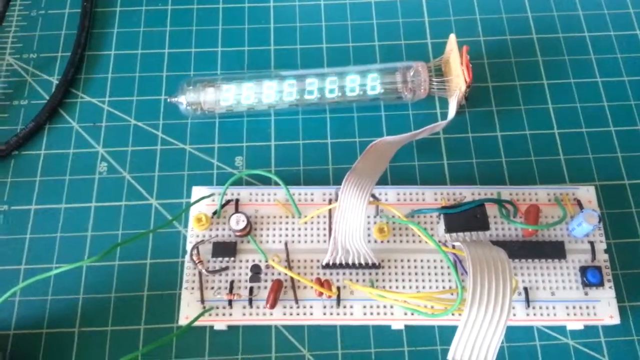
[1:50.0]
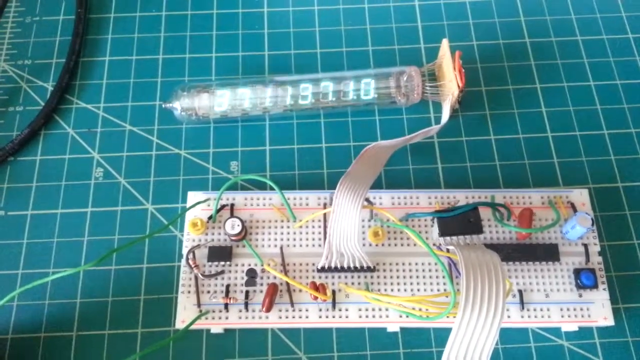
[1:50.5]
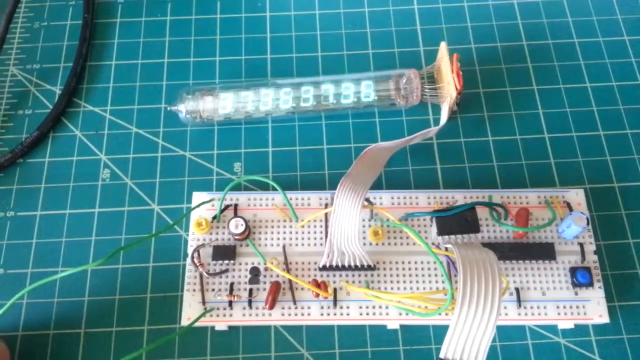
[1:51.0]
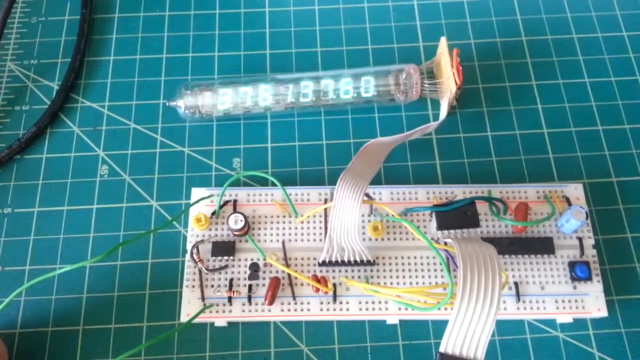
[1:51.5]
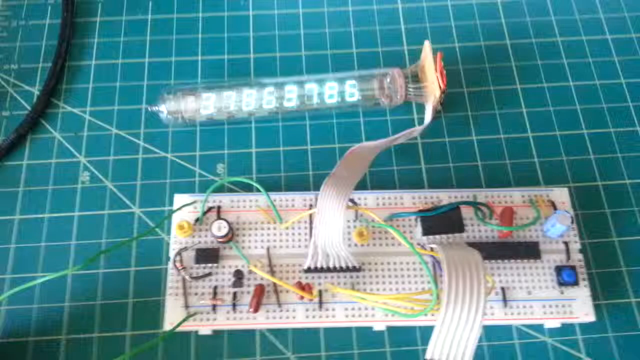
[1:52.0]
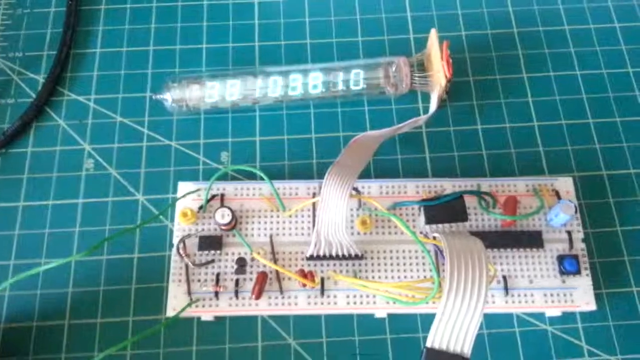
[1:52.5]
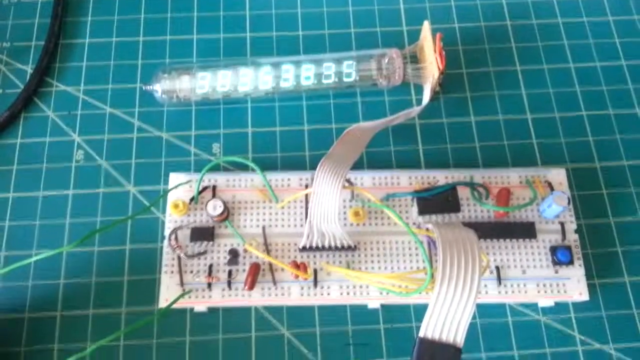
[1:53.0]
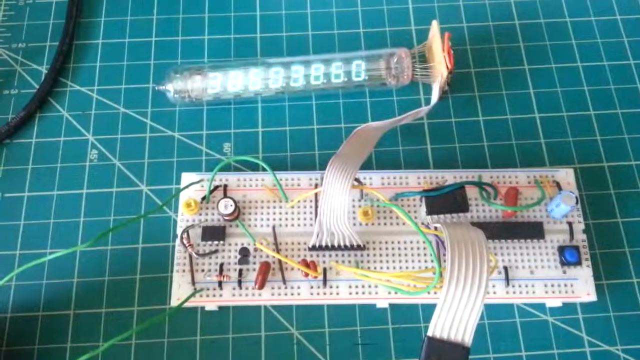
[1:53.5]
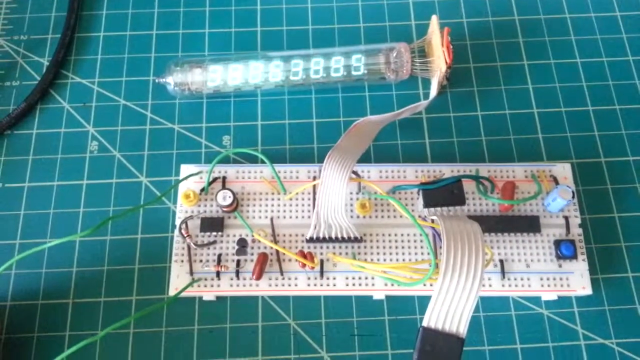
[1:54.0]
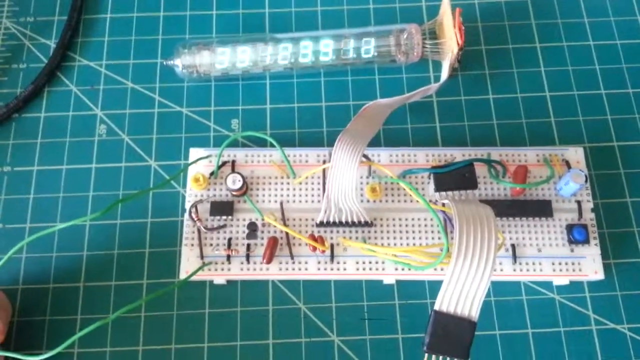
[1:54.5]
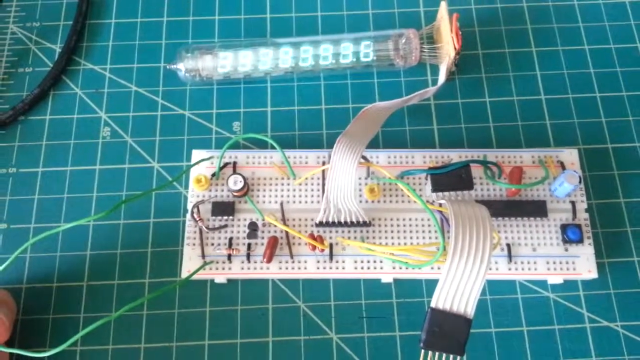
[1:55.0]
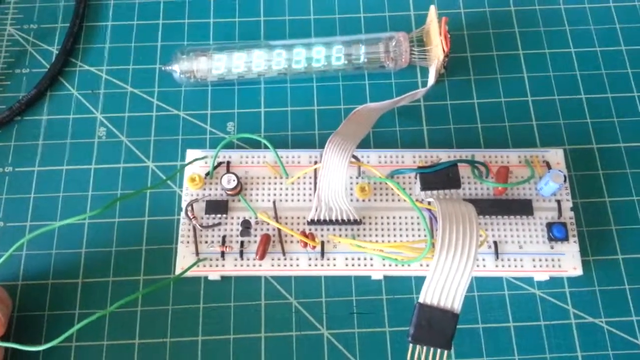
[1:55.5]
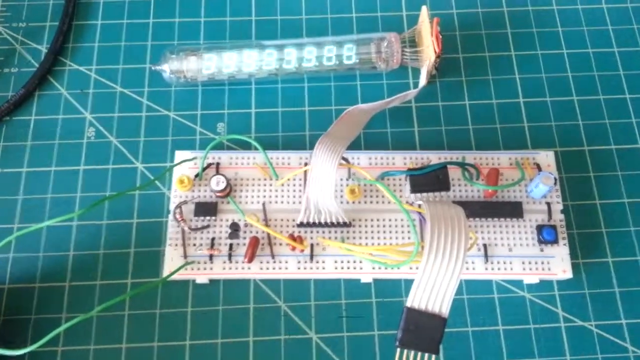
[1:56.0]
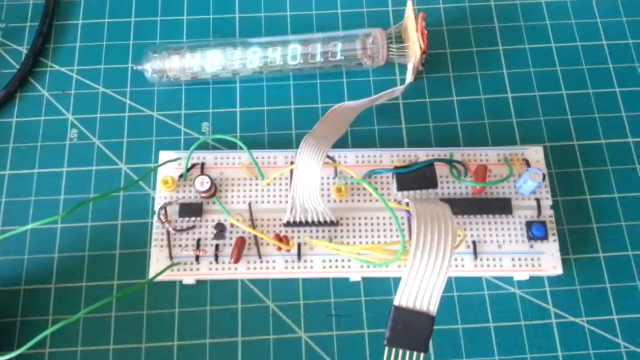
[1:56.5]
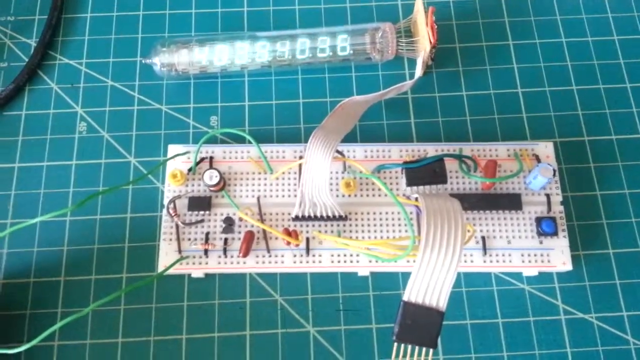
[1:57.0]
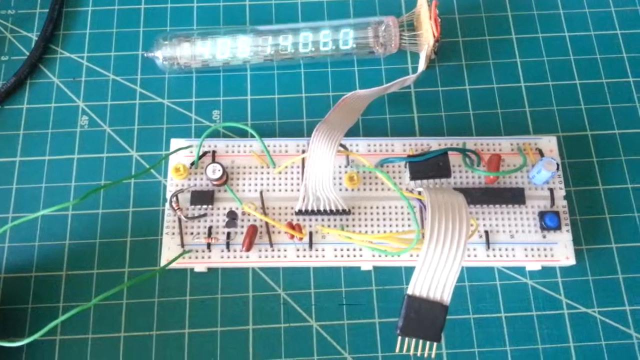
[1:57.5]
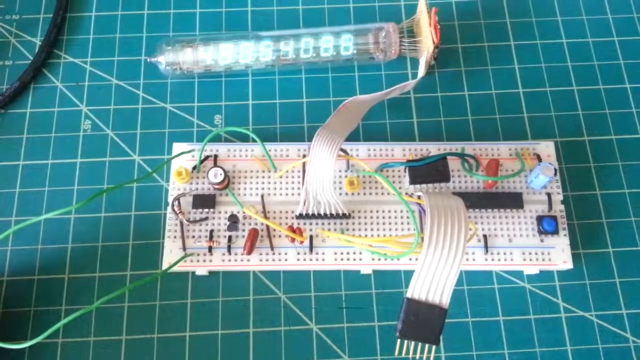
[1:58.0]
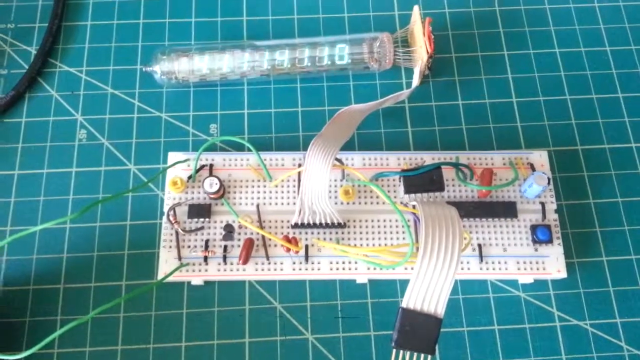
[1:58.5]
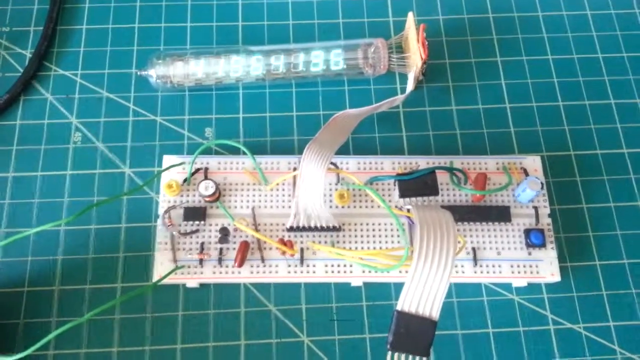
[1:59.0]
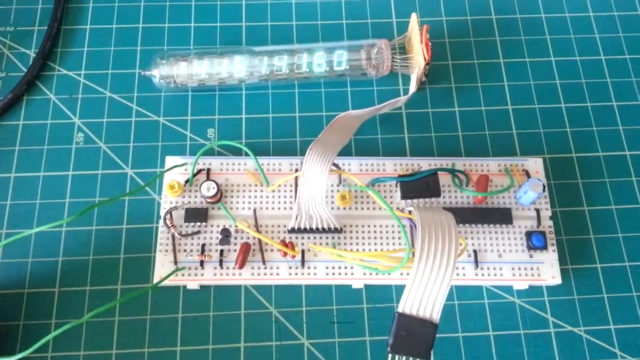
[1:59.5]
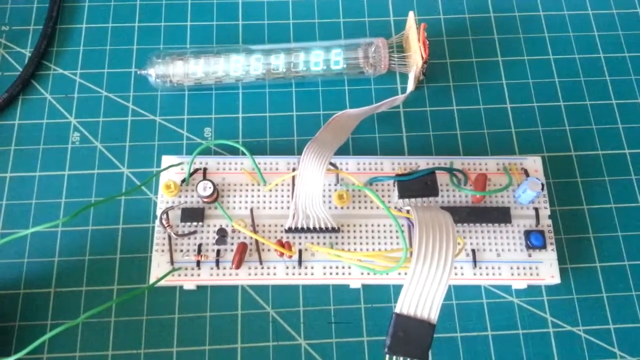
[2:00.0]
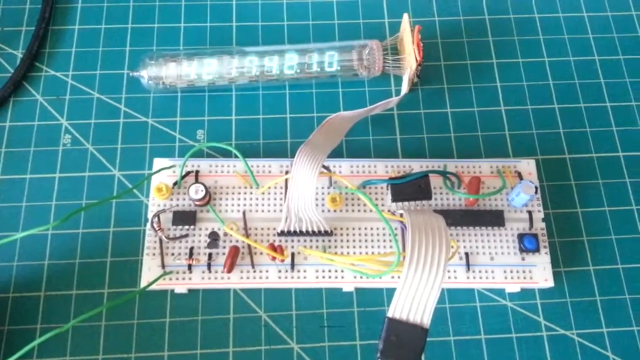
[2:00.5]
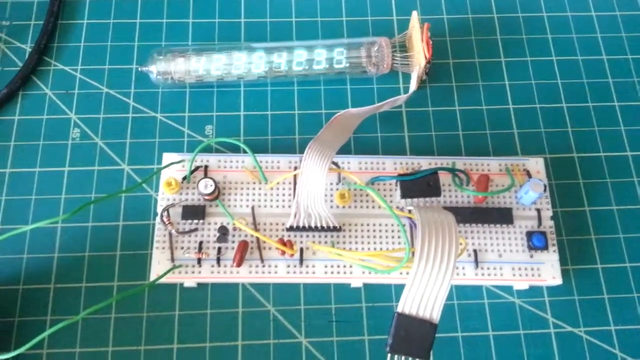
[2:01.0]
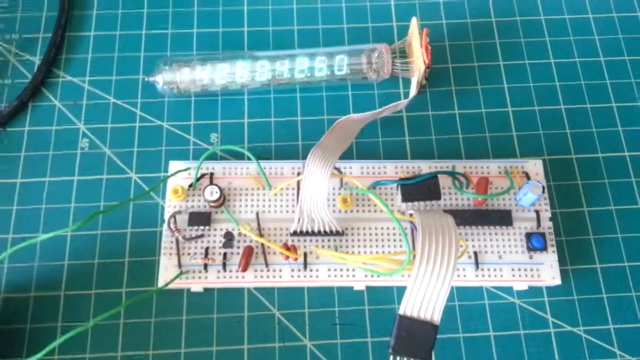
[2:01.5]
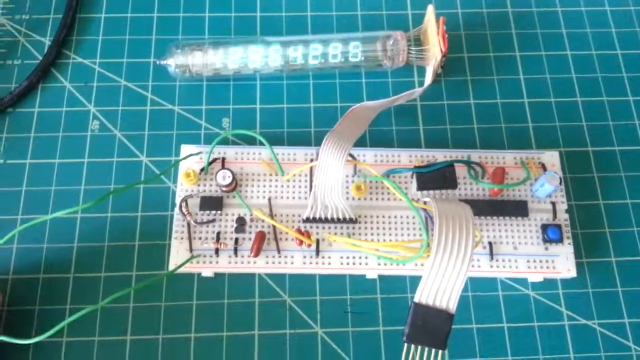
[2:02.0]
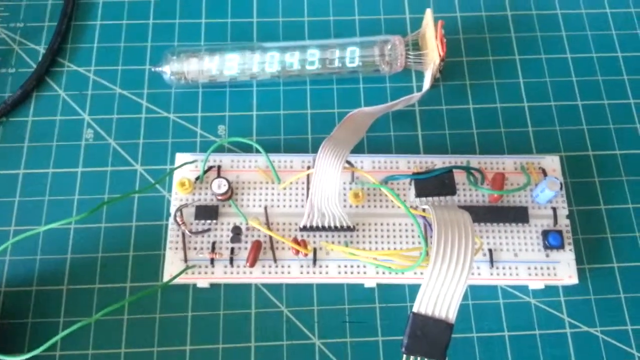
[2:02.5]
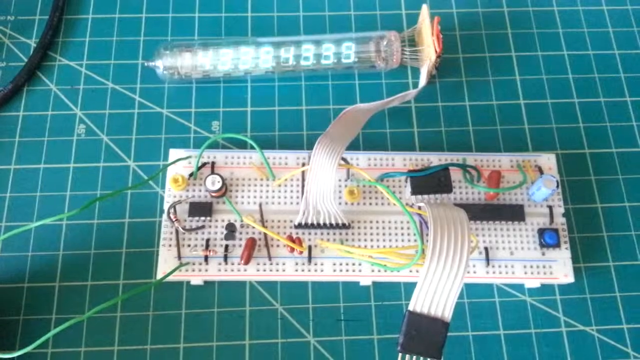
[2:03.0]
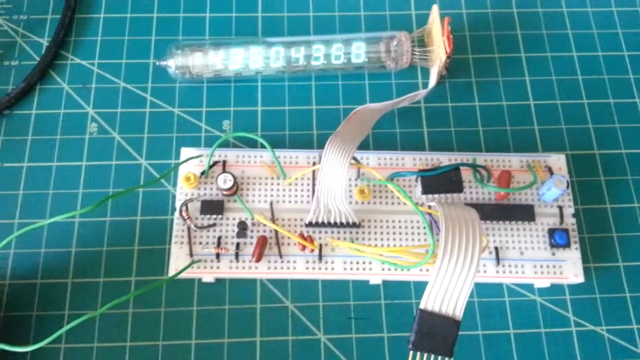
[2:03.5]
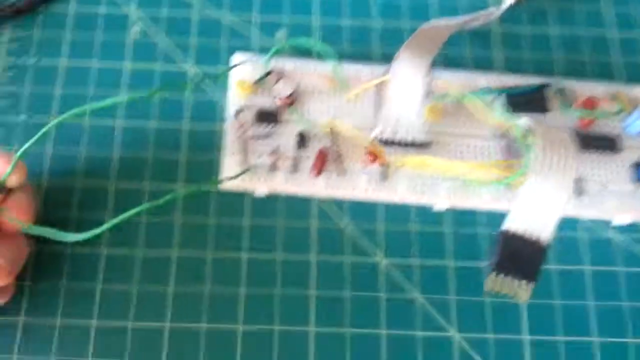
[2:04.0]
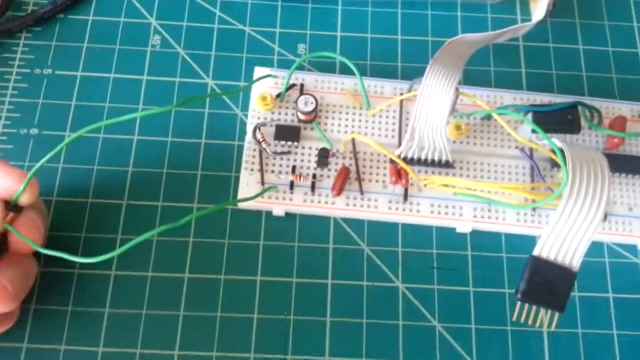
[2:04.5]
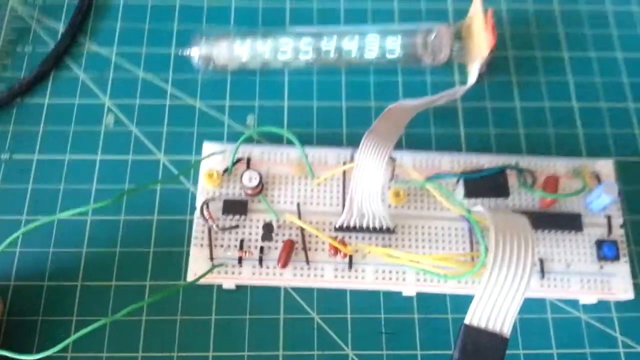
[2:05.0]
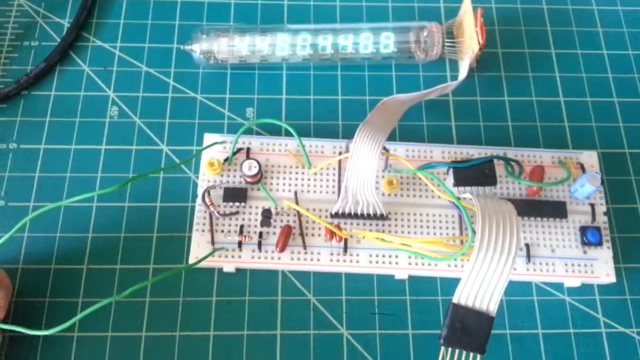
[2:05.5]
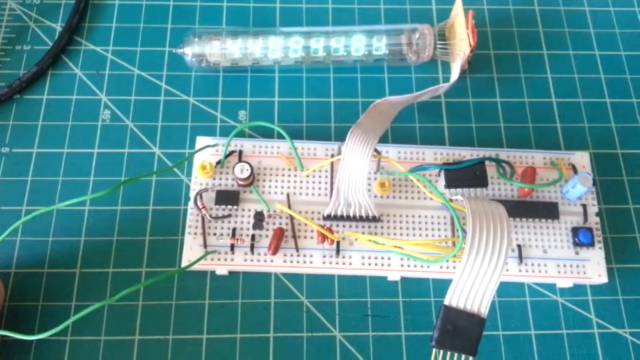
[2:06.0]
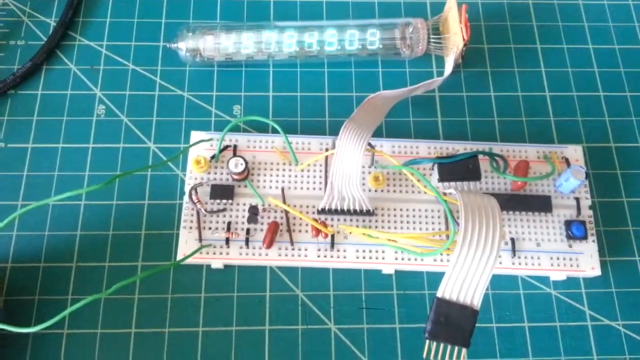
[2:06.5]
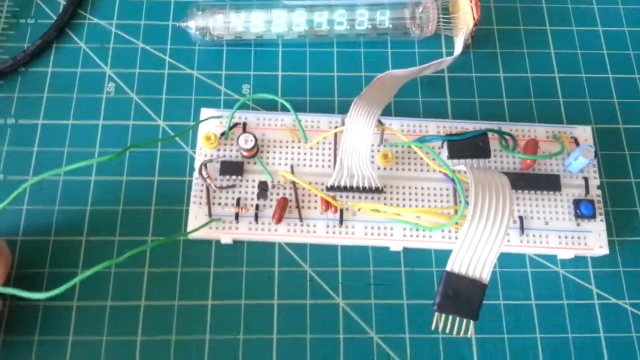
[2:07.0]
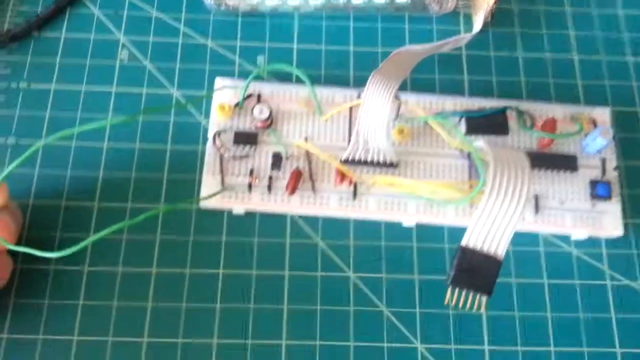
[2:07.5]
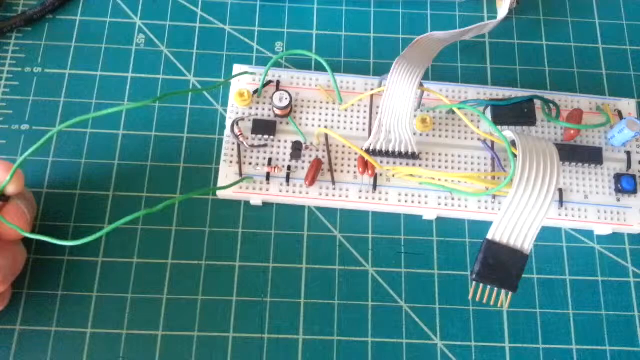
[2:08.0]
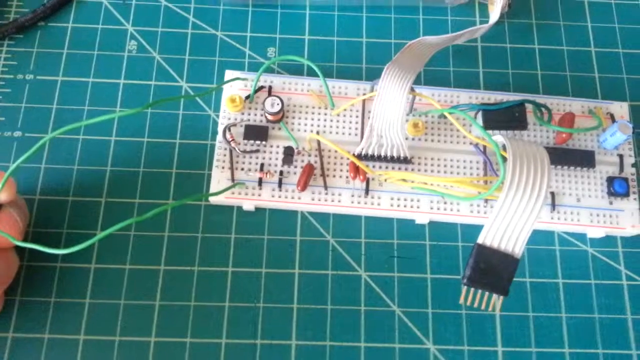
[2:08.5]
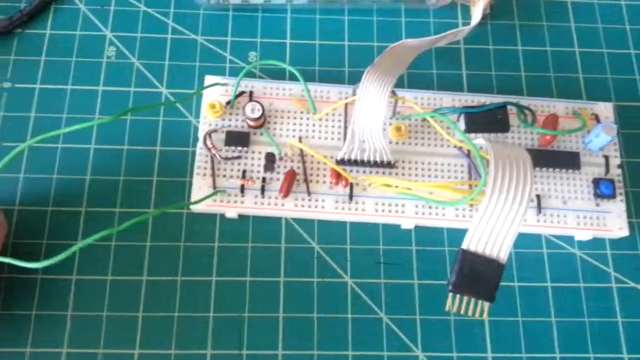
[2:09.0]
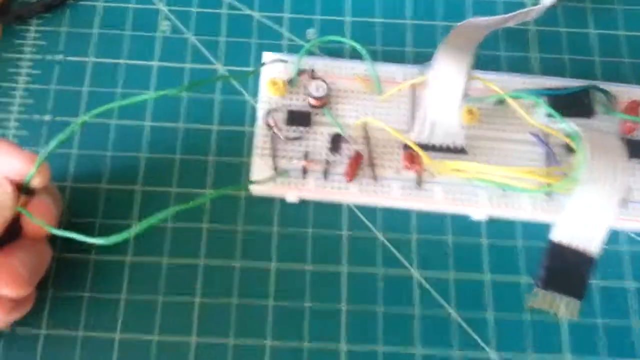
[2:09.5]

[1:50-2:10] The same setup is still shown, and the camera seems to shake a bit, apparently because the user is holding it with his right hand while his left hand holds something around the cable, which is probably related to the number shown on the LEDs of the glass tube. The number seems to go down, from 240 to 130, and oscillates up and down nonstop, across values such as 40, 240 and 280 or more. Because of the brightness of the LEDs, it is hard to see whether there are decimals.